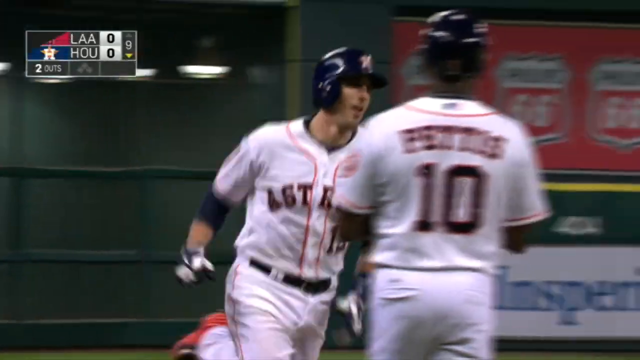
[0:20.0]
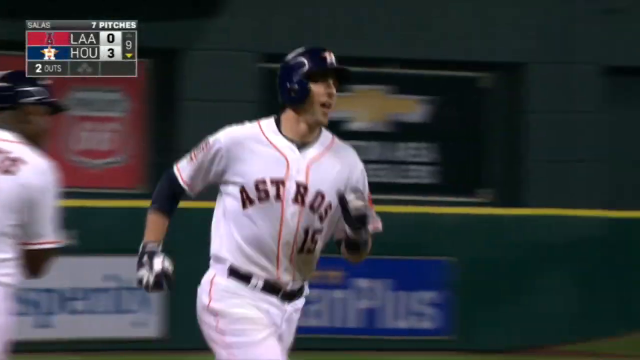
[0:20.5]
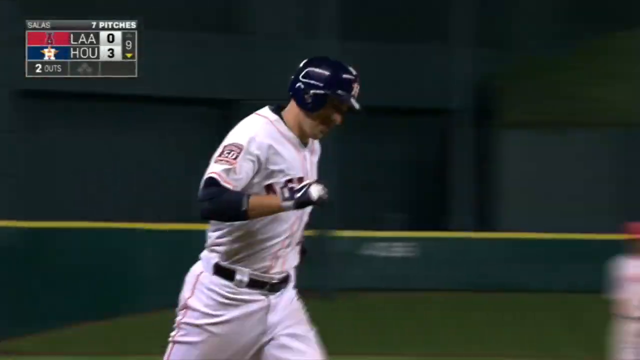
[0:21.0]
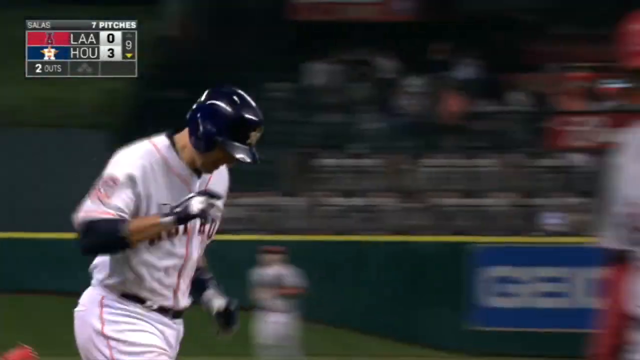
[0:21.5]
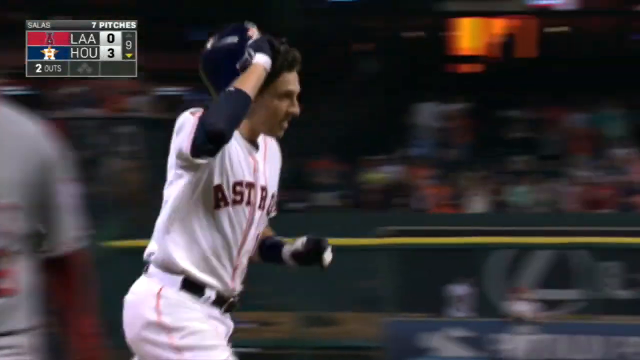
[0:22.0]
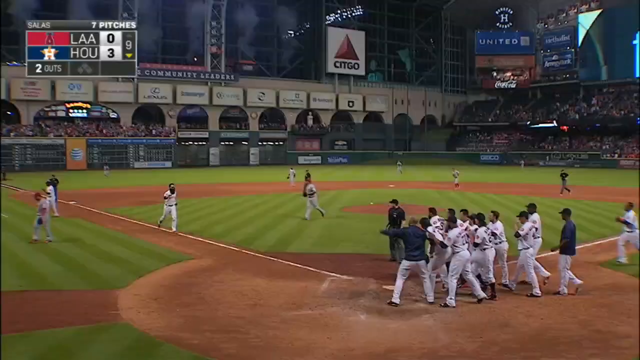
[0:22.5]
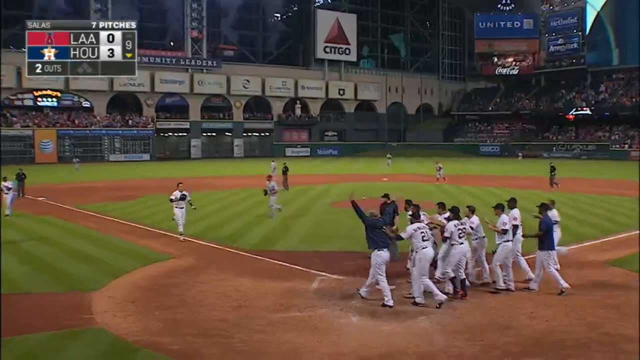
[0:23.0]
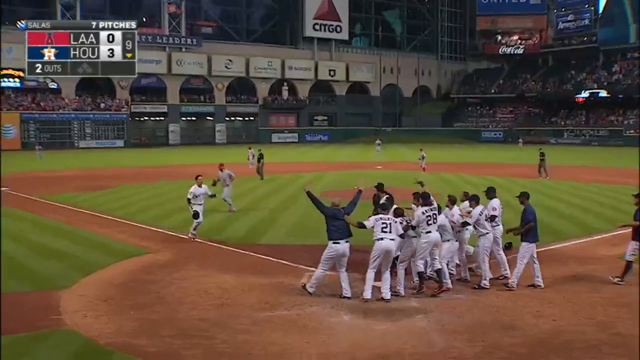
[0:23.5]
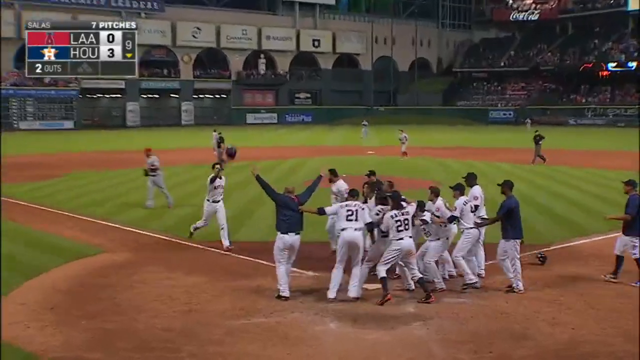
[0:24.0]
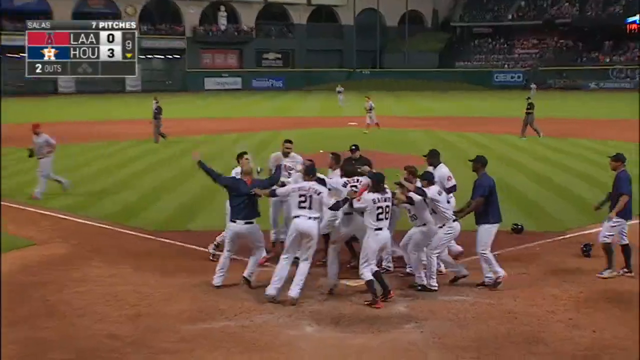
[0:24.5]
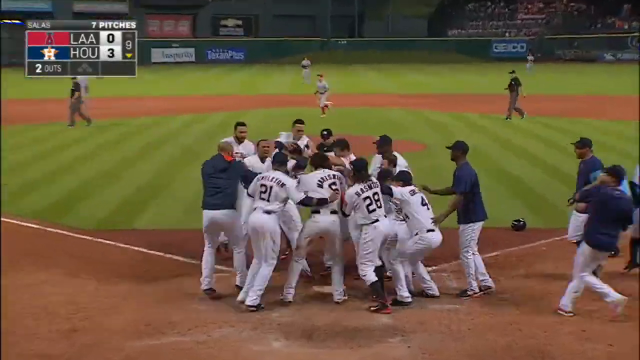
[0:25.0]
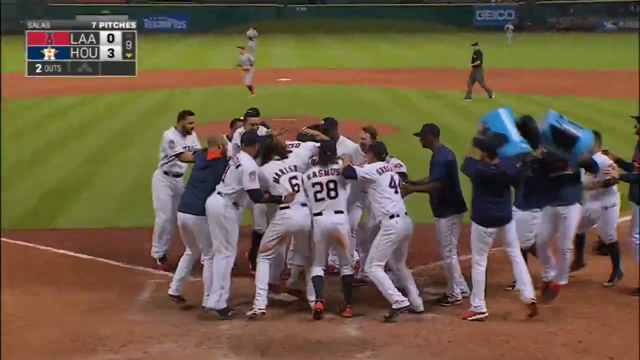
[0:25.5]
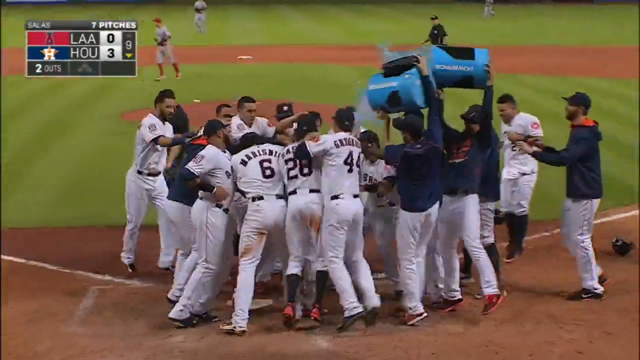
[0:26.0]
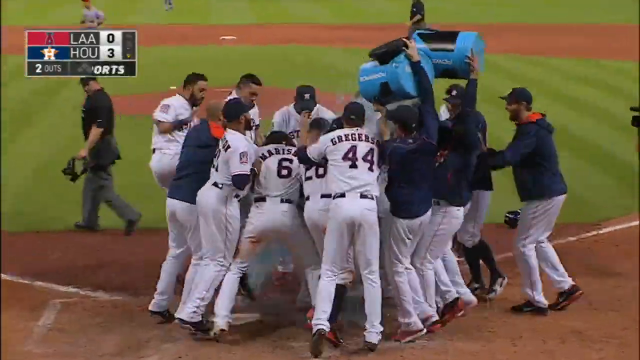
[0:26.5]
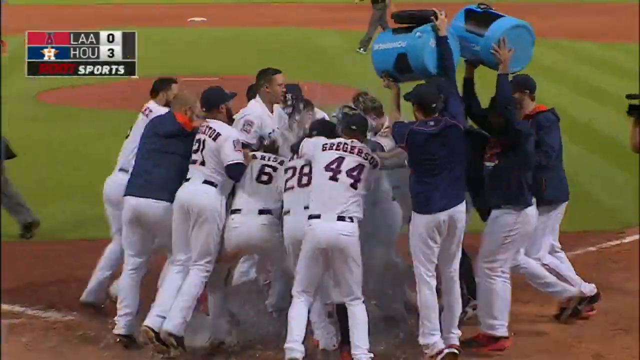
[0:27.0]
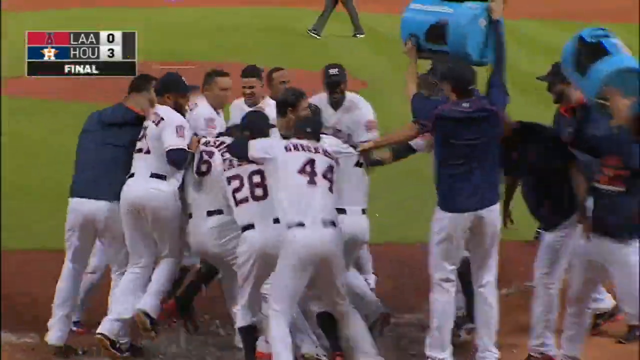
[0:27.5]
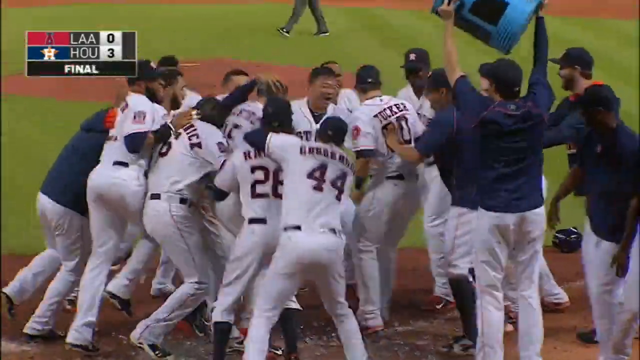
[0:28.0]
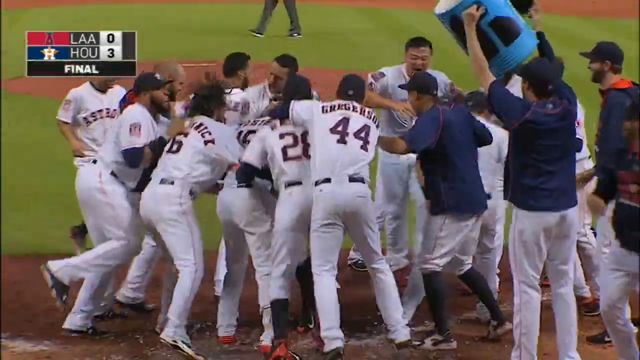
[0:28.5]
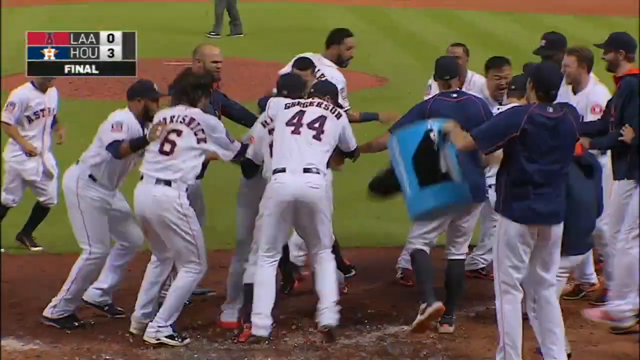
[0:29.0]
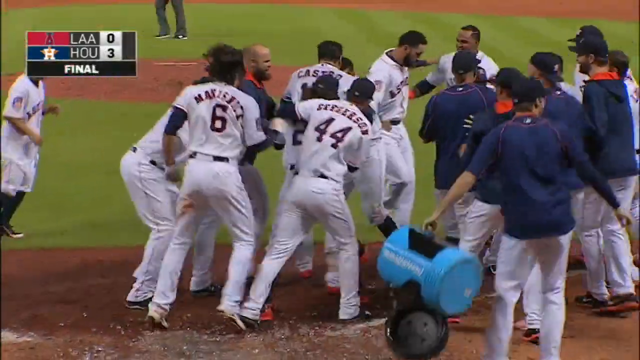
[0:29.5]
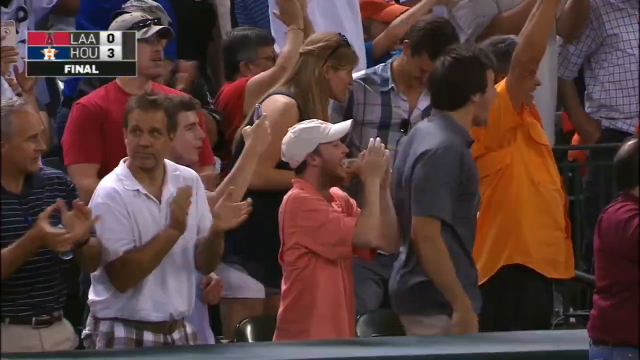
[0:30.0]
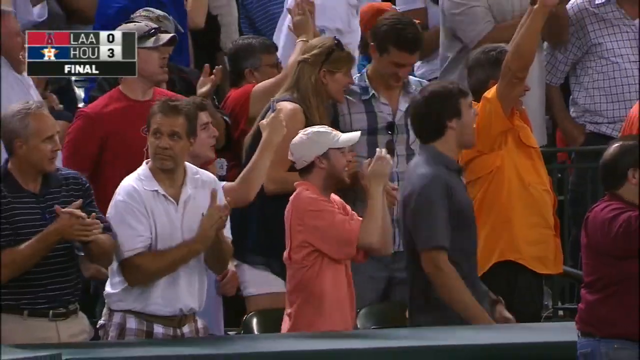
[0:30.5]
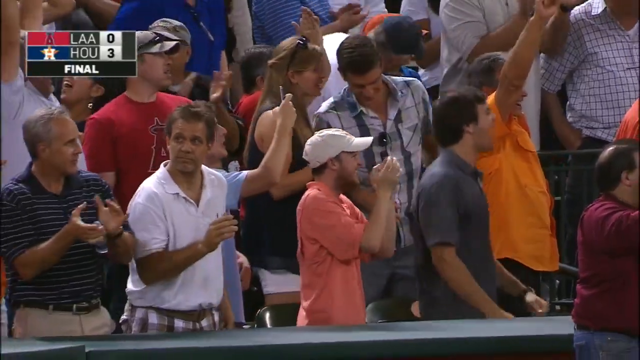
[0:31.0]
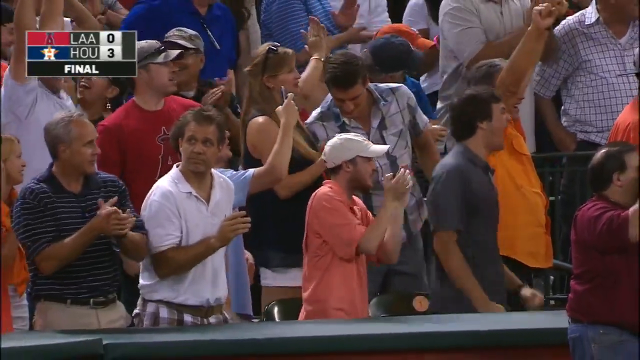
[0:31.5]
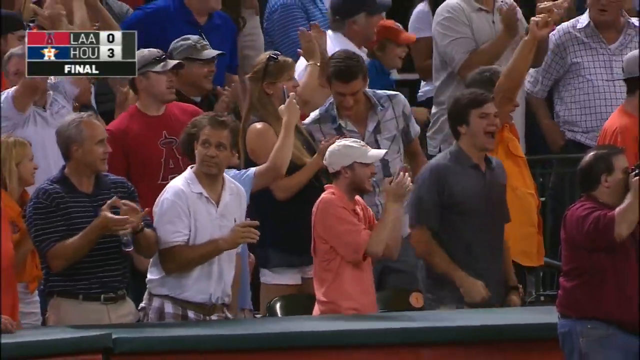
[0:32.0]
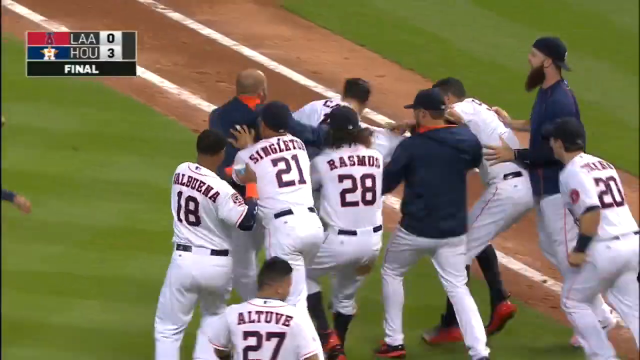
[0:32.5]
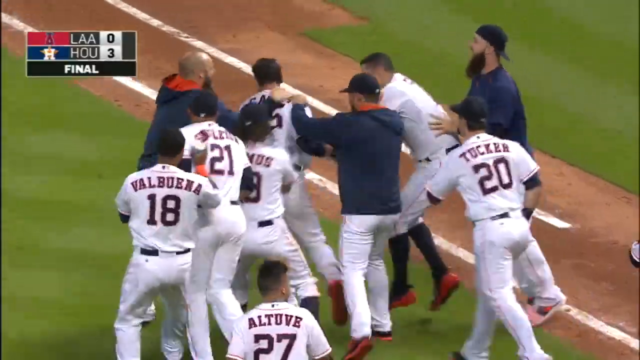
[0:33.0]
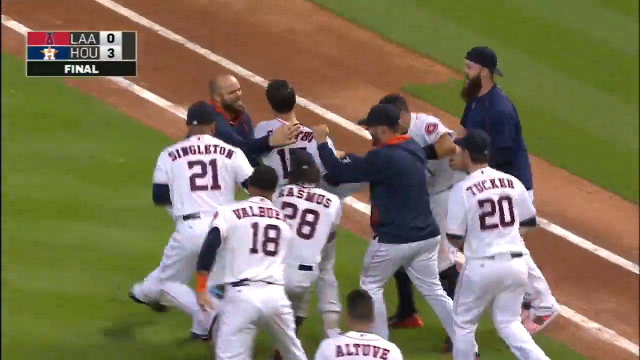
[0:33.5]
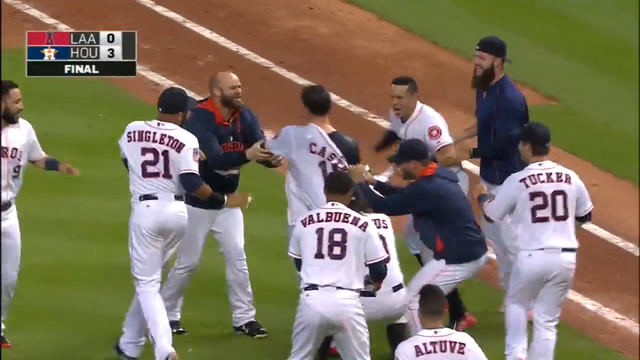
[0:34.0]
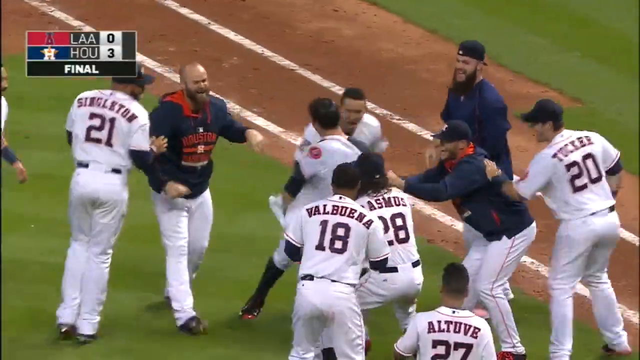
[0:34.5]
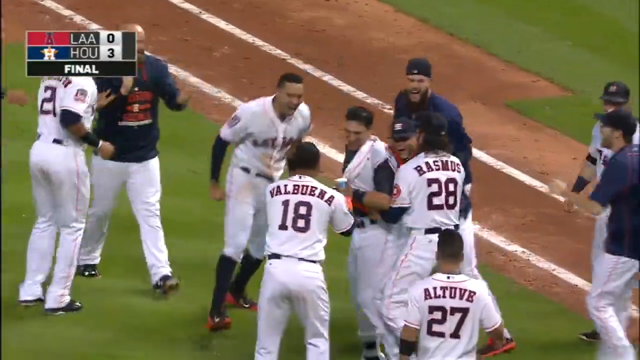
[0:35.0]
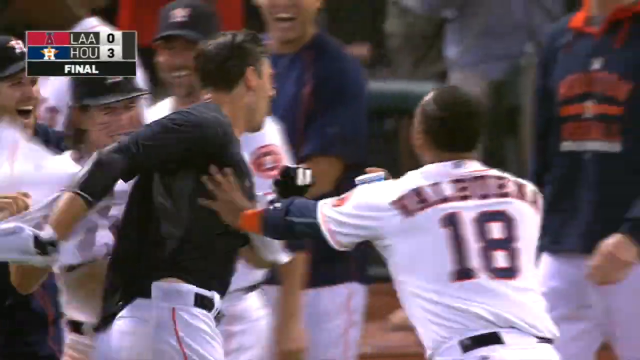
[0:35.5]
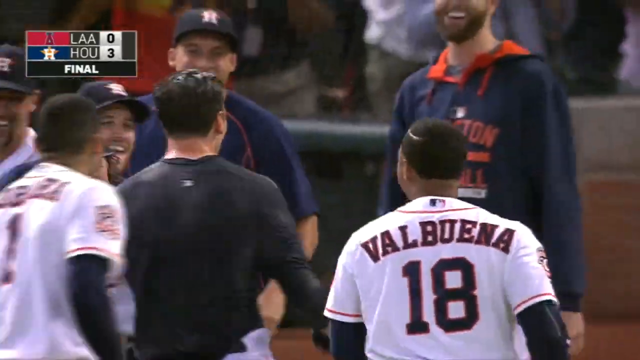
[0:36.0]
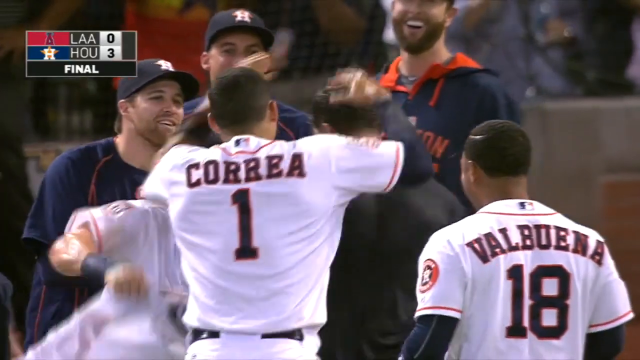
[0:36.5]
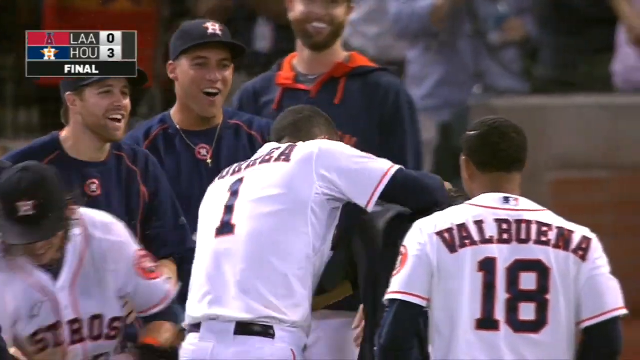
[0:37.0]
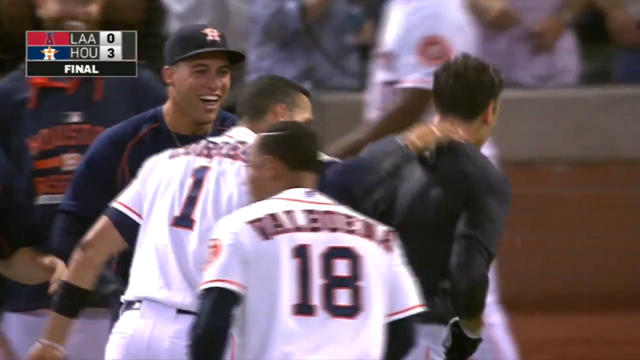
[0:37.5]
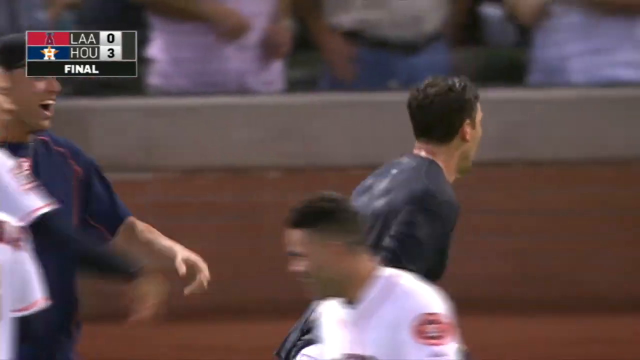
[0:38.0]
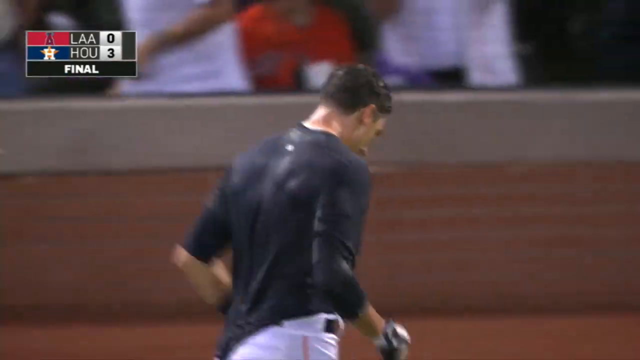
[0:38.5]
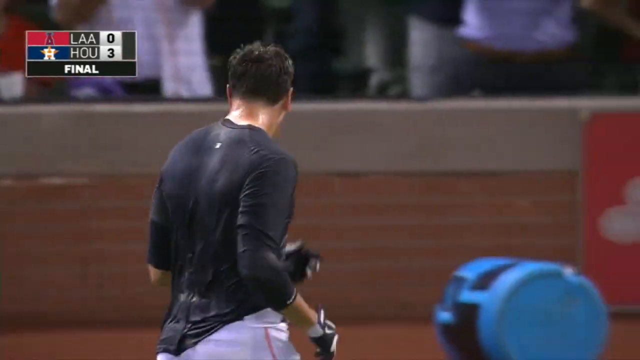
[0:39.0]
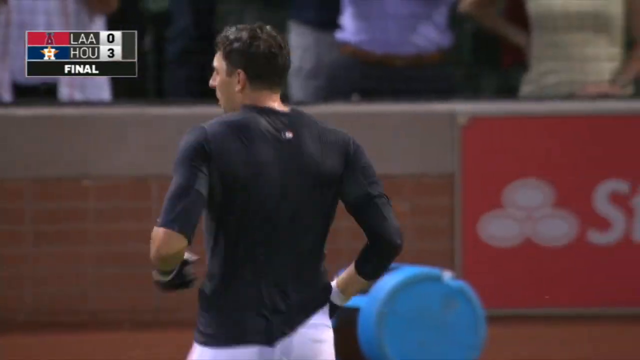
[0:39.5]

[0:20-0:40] The Astros player's deep home run to right field over the wall gives Houston a 3-0 lead. With the fans and the stadium in the background, the player trots around the bases and takes his helmet off before reaching home plate, where the entire Houston Astros team has gathered to celebrate. This is the Houston Astros' stadium, with a field logo on the left field wall above the fence. The player throws his helmet into the air after his game-winning home run, and teammates dump ice water on him as he crosses home plate. He appears to run off in jubilation, and the team follows him down the baseline, celebrating the walk-off win. A blue water jug from which the water was dumped is in the background.